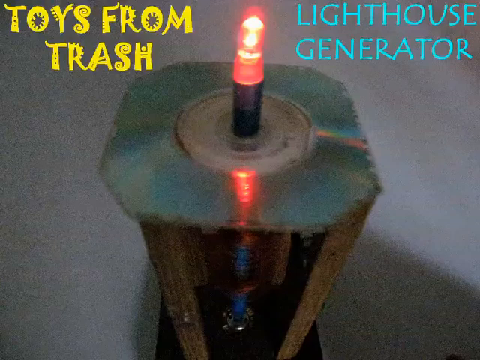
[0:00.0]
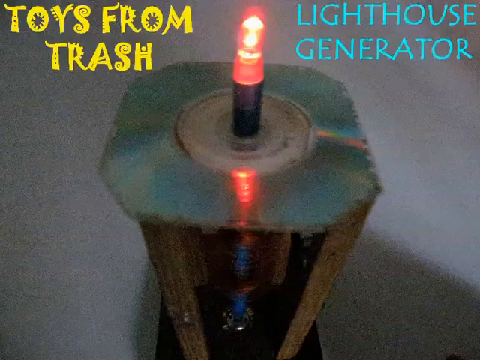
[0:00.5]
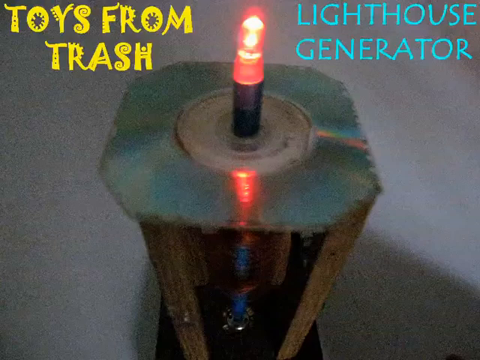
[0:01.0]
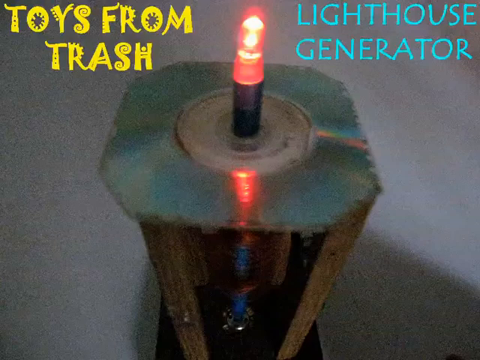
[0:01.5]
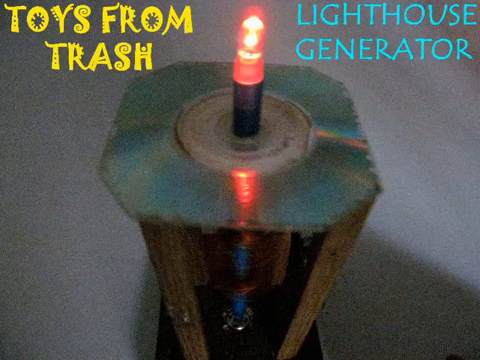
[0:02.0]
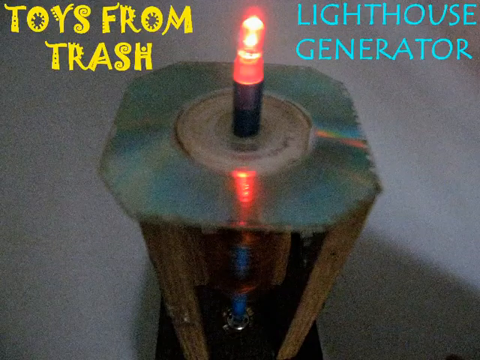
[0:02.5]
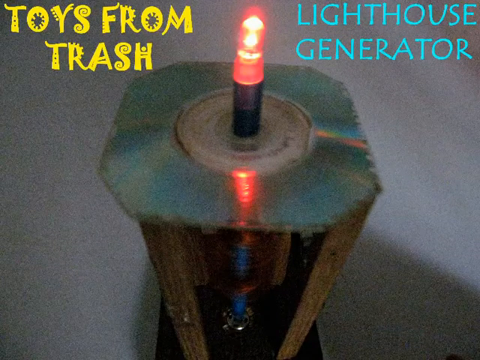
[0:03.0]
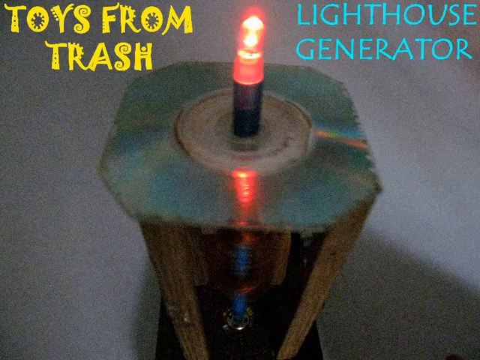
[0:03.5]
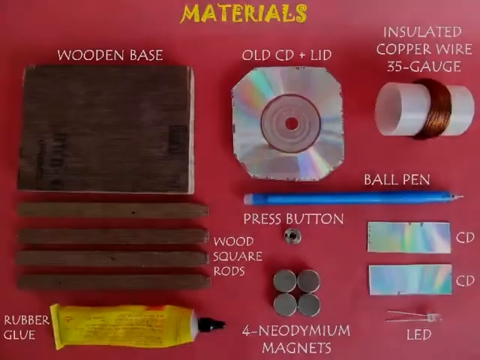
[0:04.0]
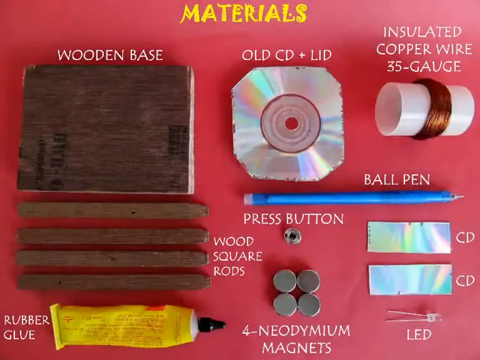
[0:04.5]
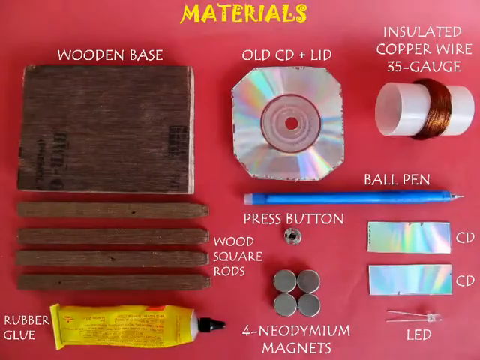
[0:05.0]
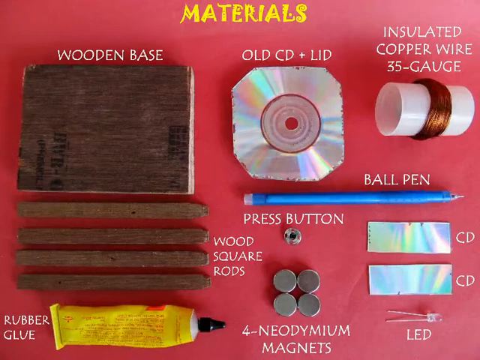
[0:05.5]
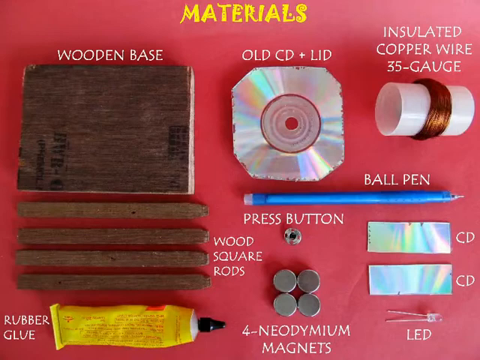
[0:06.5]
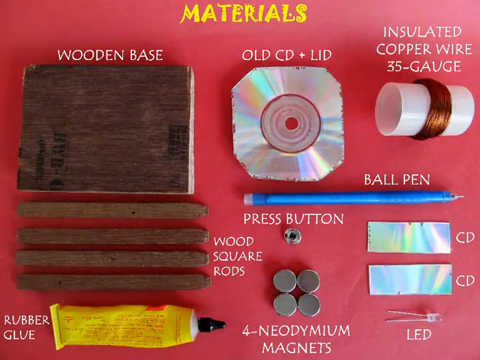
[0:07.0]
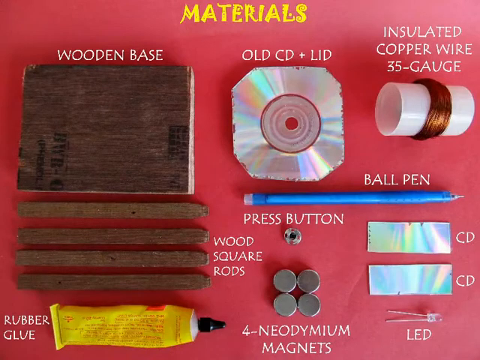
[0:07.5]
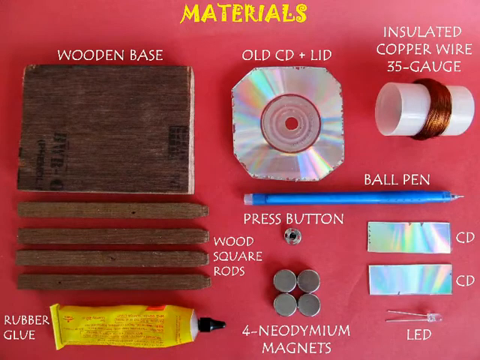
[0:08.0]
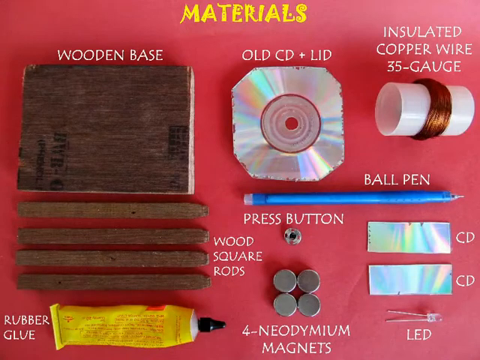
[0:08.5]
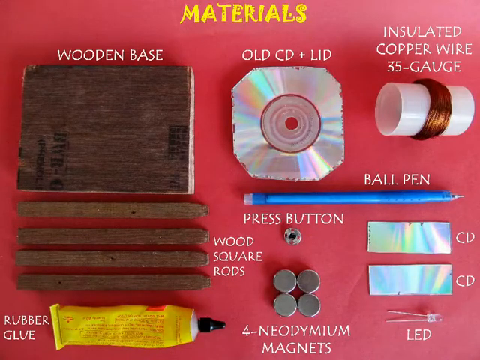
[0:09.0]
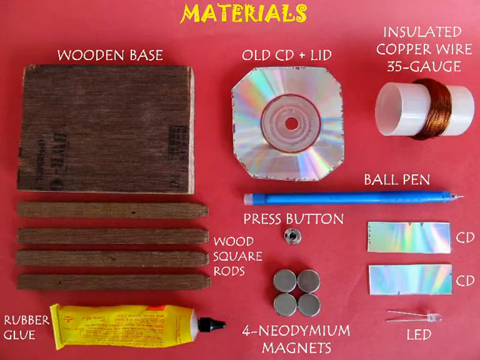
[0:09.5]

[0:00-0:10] The video opens with yellow lettering in a funky font on the left side reading "toys from trash" and cyan blue lettering on the right side reading "lighthouse generator". In the middle is the lighthouse DIY generator they created: a red LED light with a CD and some wood underneath, against a white background. The screen transitions to another screen that says "materials" in yellow funky lettering. It shows a wooden base, rubber glue, wood square rods, neodymium magnets, a press button, an LED light, a ball pen, 35 gauge insulated copper wire, an old CD plus lid, and a press button, with a red table behind them.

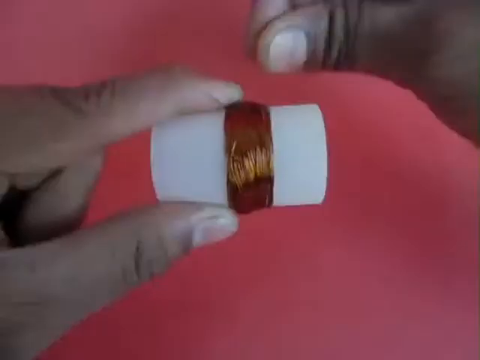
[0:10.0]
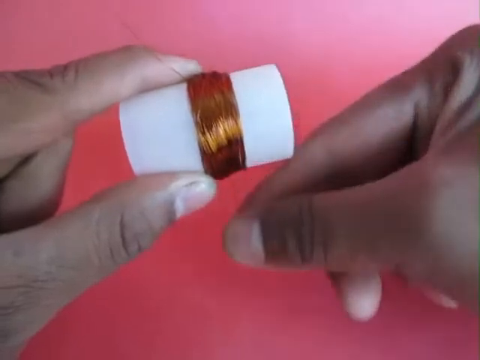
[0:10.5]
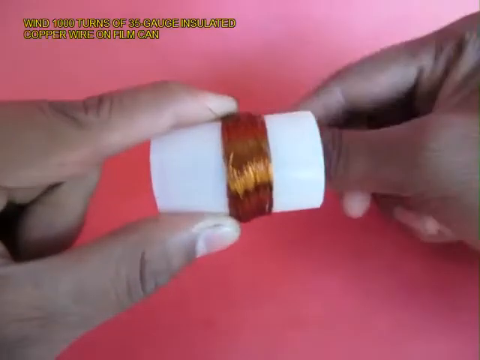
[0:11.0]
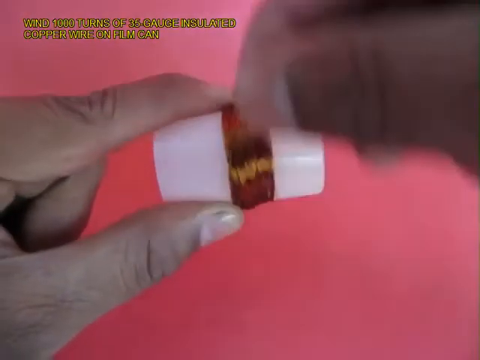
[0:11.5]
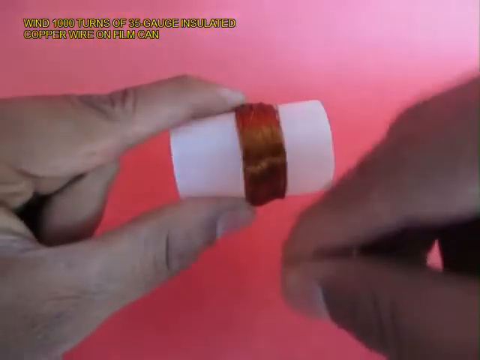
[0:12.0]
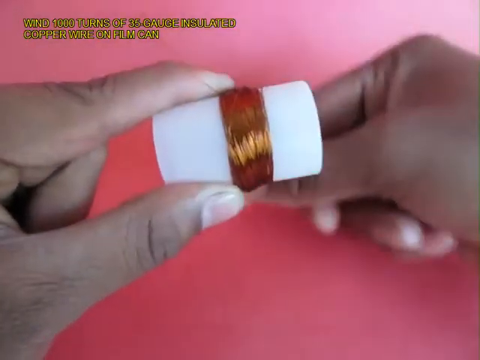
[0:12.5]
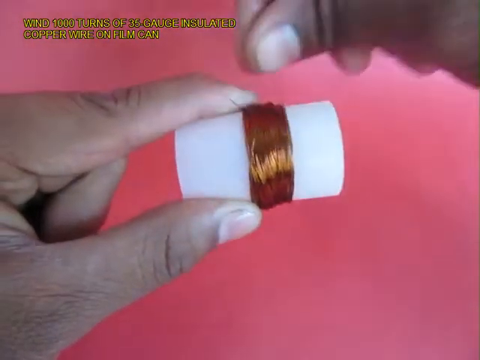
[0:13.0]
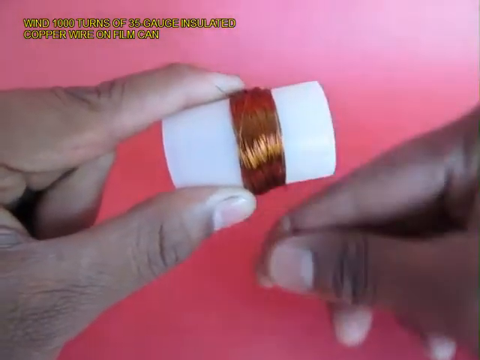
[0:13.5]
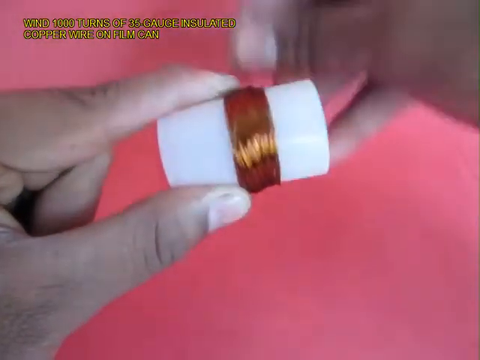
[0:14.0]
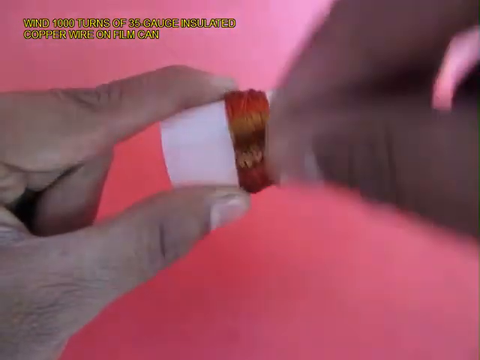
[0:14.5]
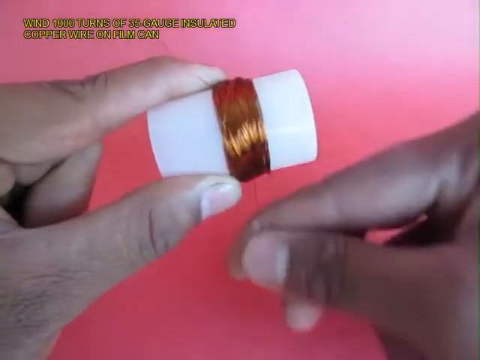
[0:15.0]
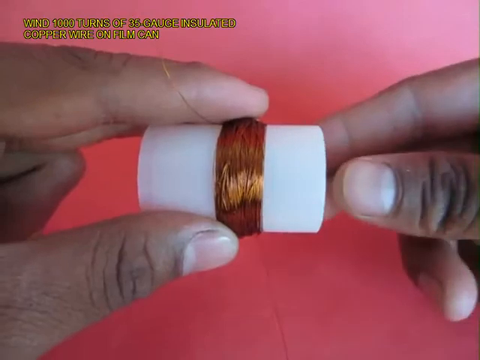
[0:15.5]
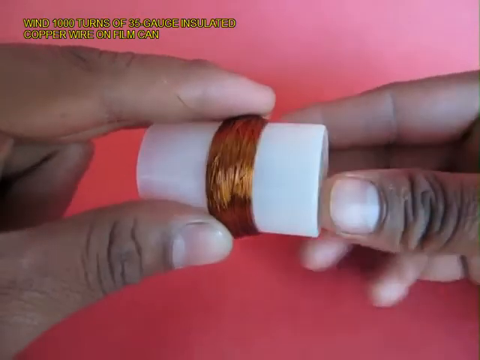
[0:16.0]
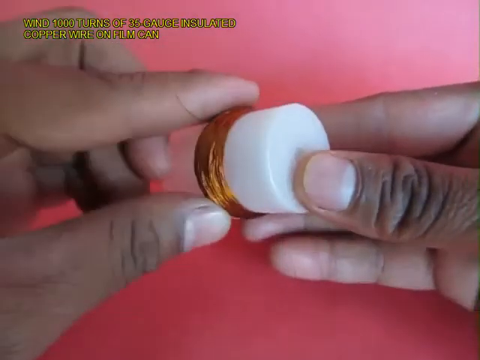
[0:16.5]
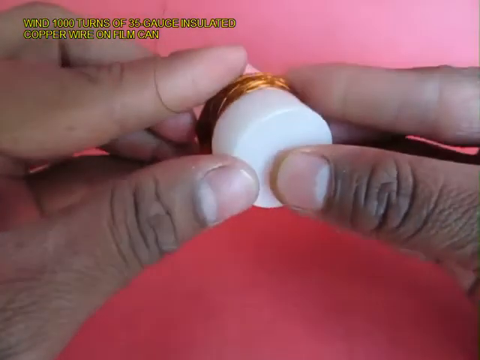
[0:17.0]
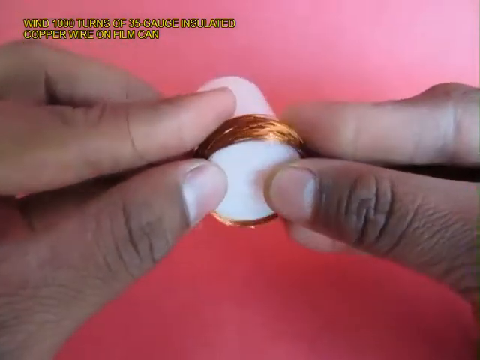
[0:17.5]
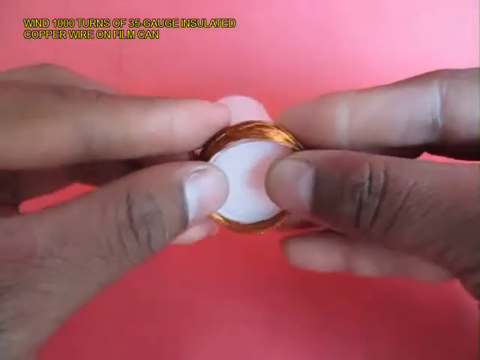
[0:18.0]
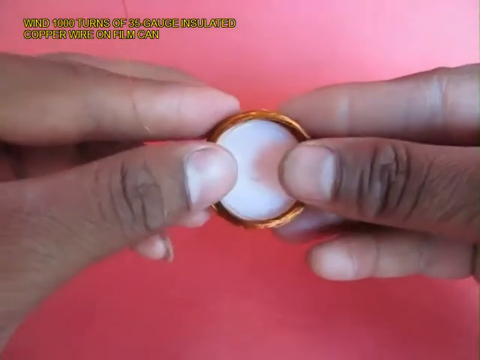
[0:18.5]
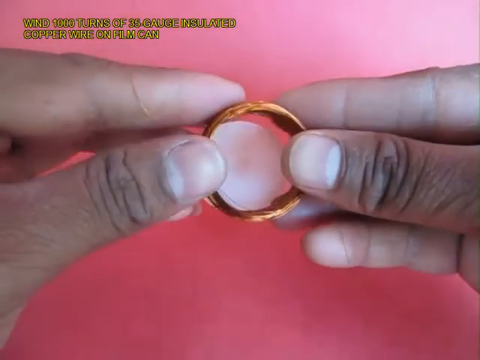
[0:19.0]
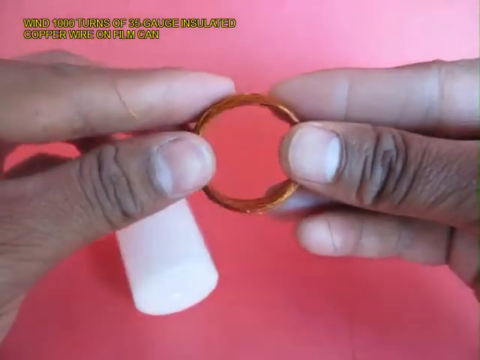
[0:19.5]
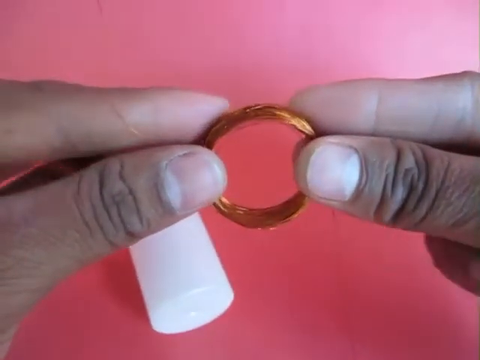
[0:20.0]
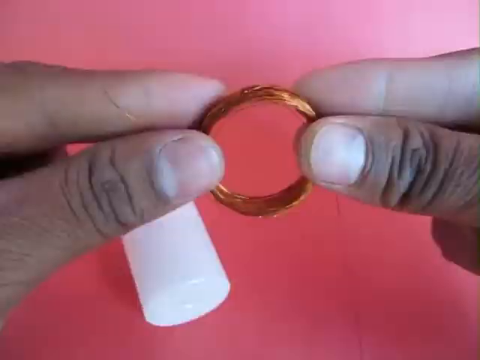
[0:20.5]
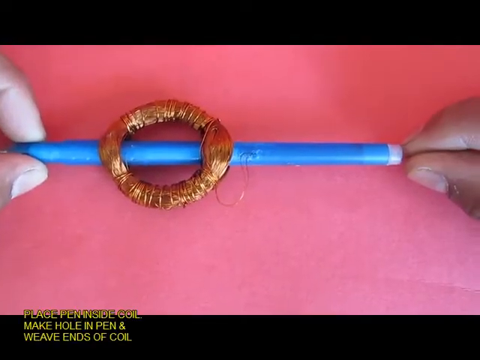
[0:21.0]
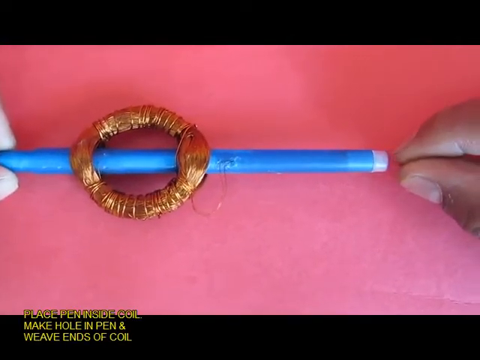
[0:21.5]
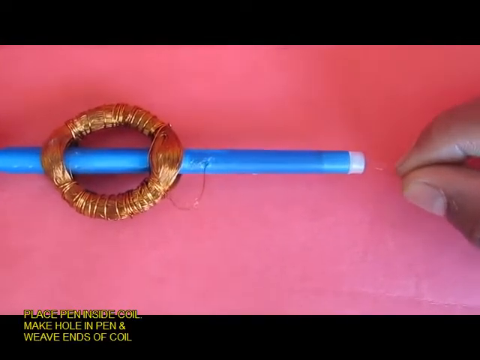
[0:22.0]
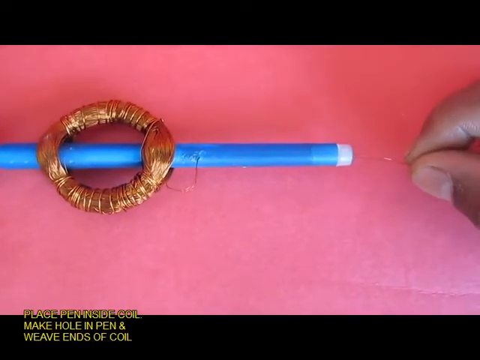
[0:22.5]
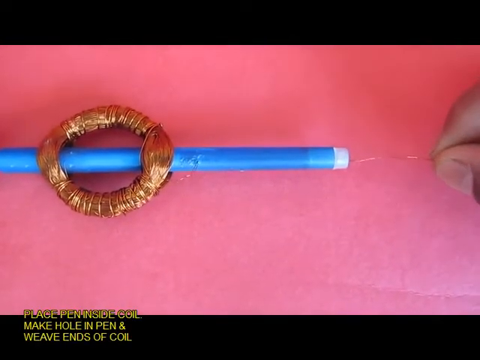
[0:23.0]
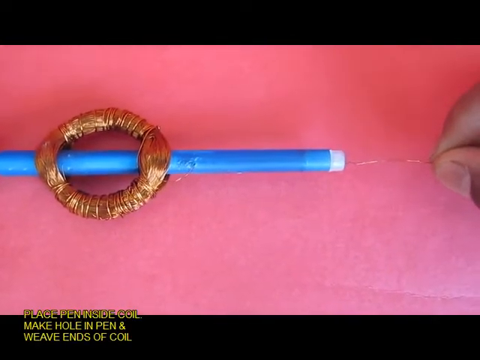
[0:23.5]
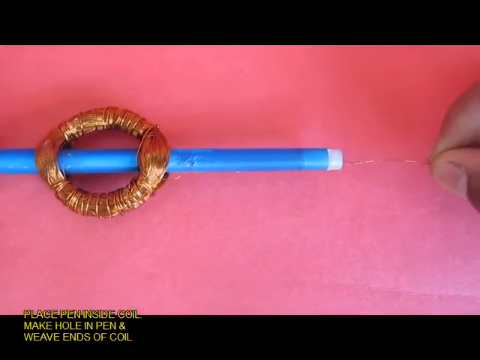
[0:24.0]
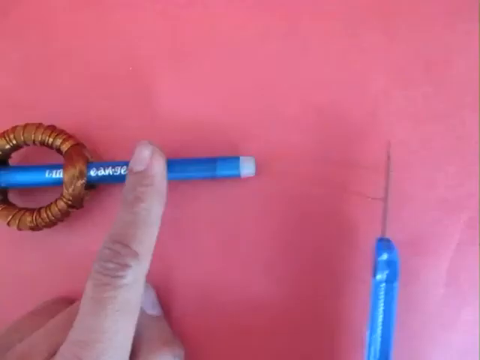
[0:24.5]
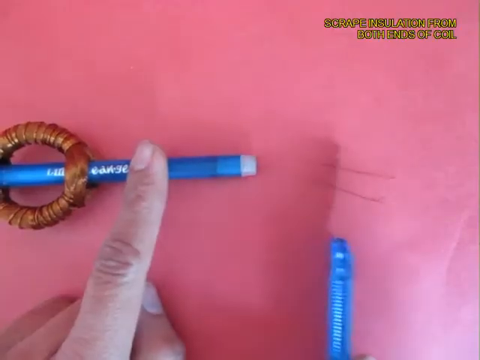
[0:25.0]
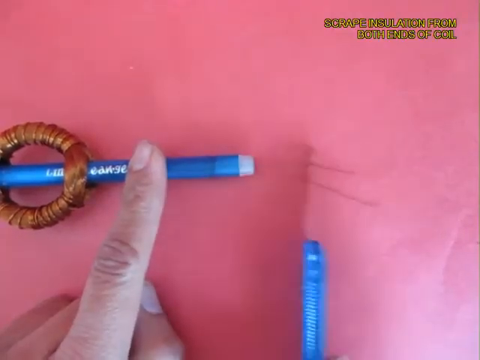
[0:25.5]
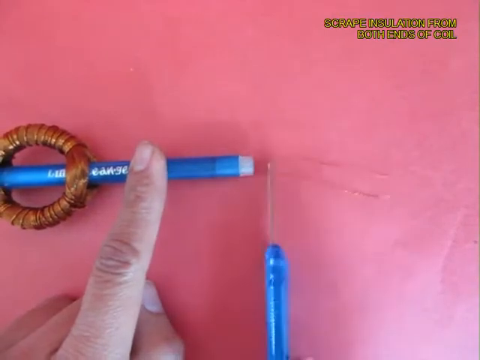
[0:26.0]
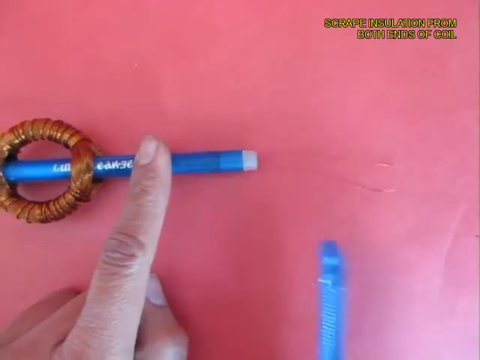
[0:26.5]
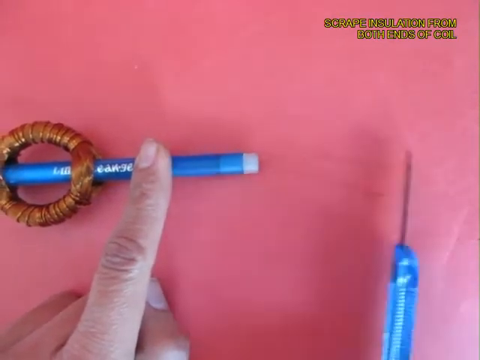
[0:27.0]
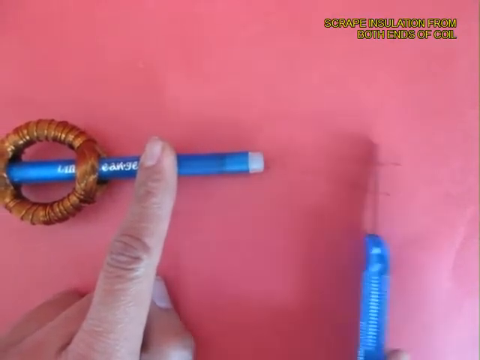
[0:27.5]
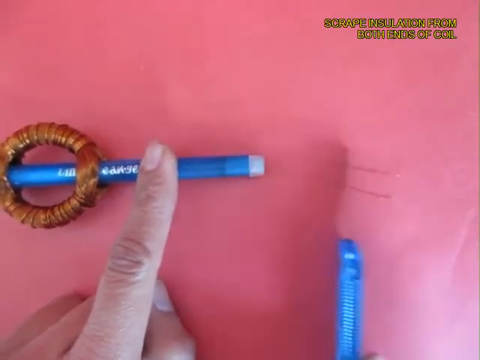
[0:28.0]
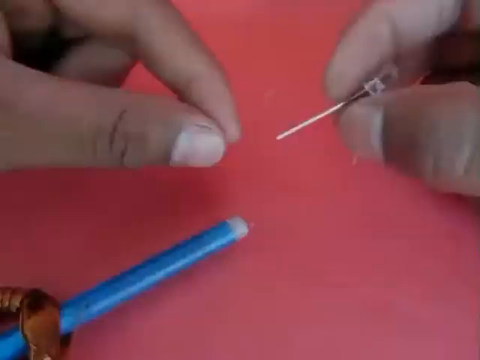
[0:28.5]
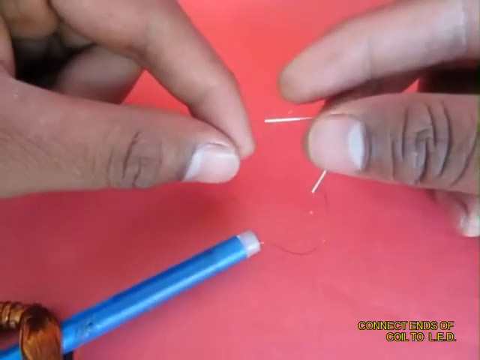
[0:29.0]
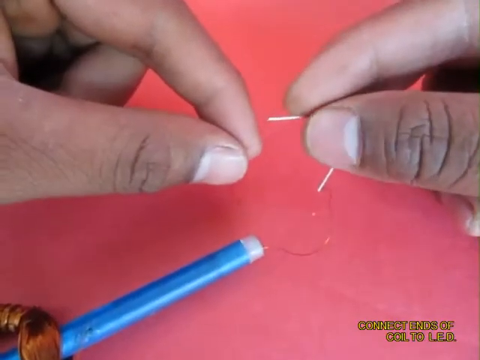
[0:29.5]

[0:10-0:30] Two hands appear, the right hand wrapping copper wire around a white tube. On the left side, text reads "Wind 1000 turns of 35 gauge insulated copper wire on film can". The right hand wraps the wire around the film can over and over again. Then they pop the wire off the film can and hold it with both hands. The scene transitions to the ball pen with the 35 gauge copper wire around it; with the left hand he slides it, and with the right hand he pulls it. He then scratches the end of the wire and twirls it around some metal.